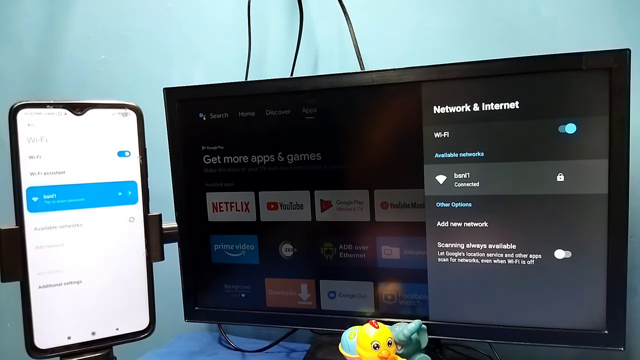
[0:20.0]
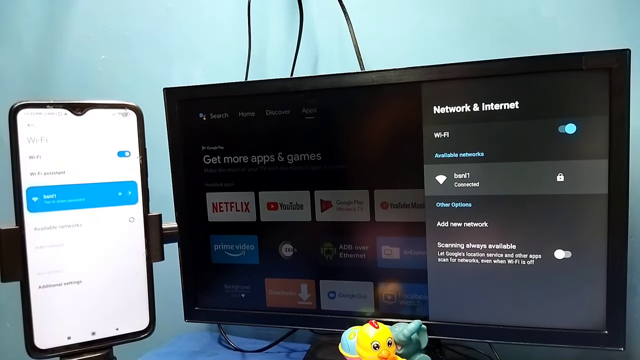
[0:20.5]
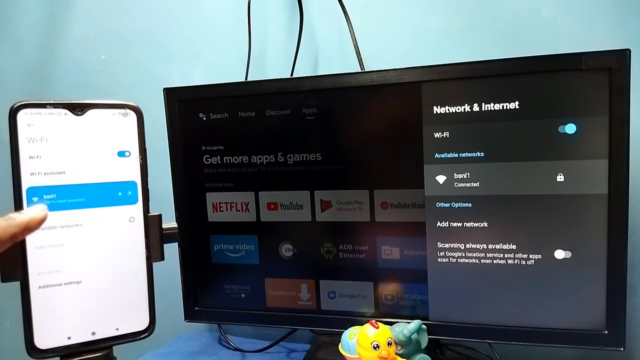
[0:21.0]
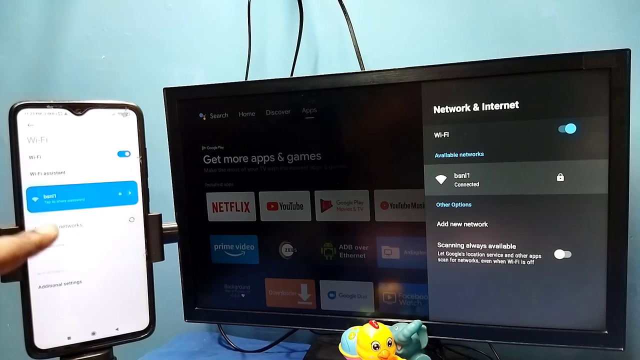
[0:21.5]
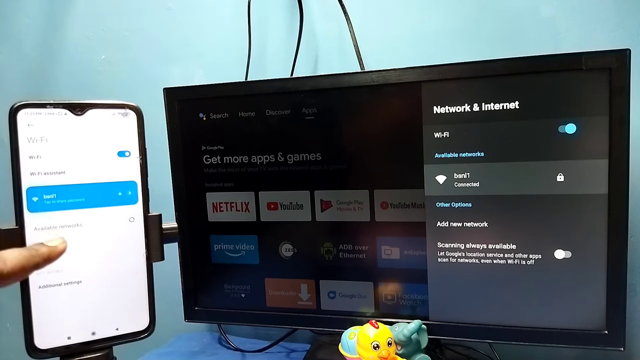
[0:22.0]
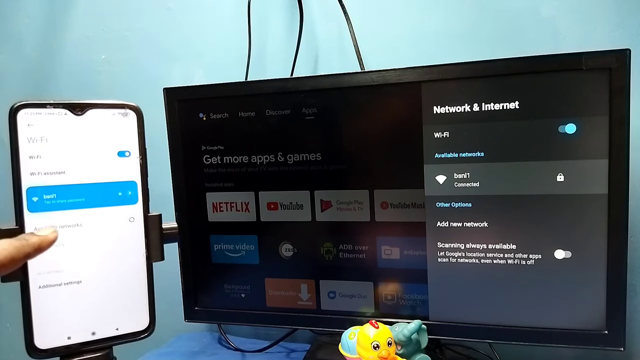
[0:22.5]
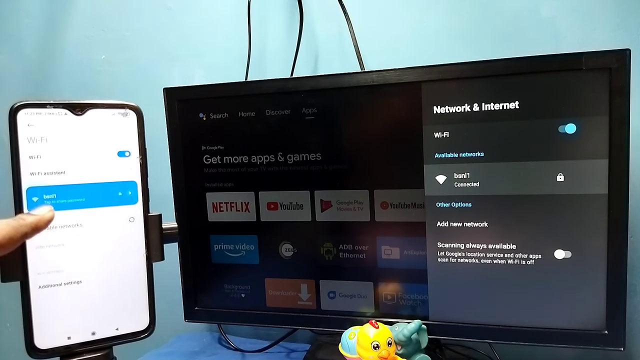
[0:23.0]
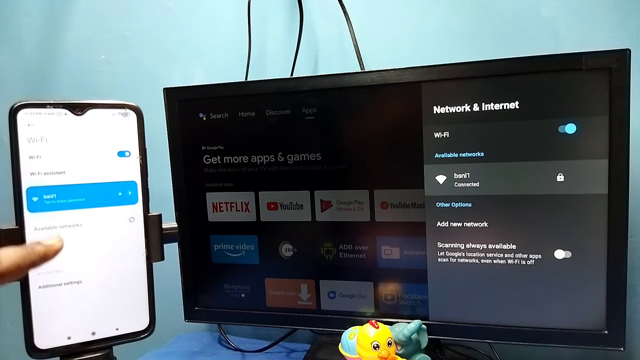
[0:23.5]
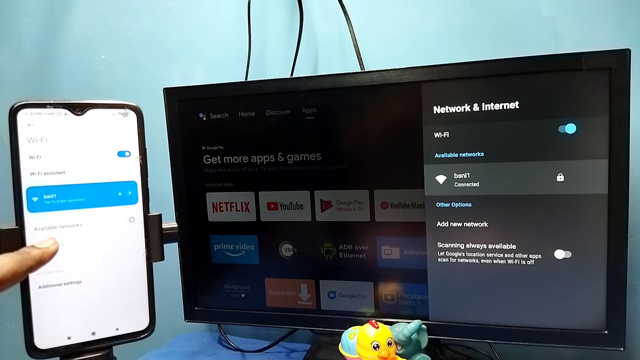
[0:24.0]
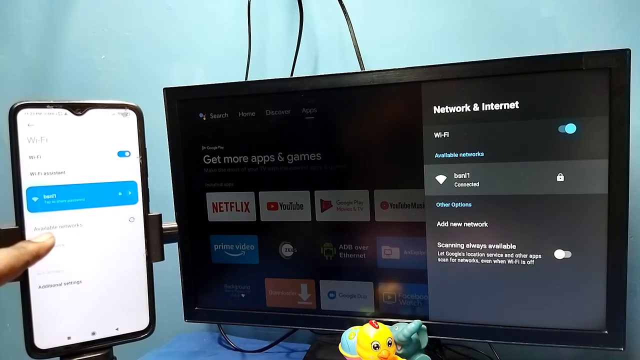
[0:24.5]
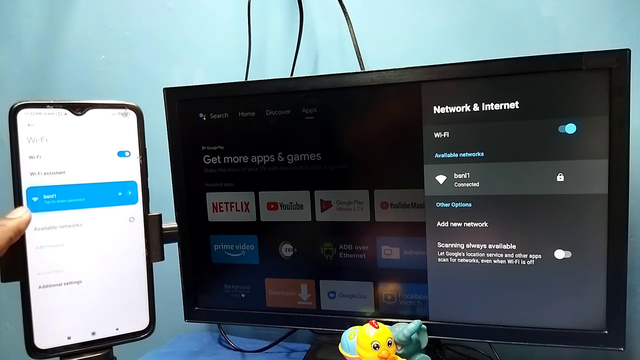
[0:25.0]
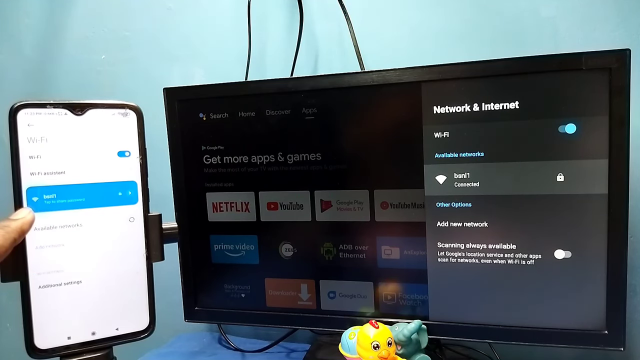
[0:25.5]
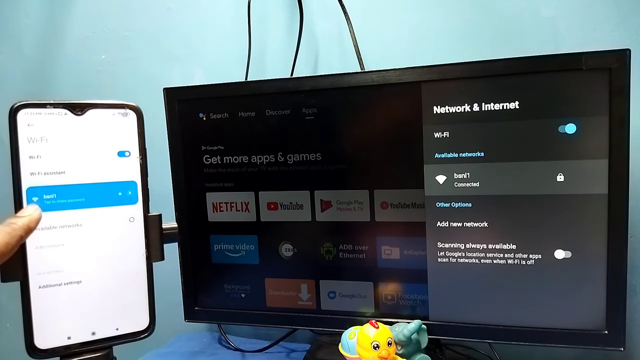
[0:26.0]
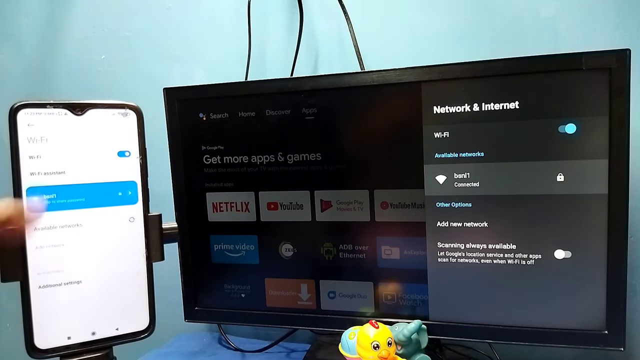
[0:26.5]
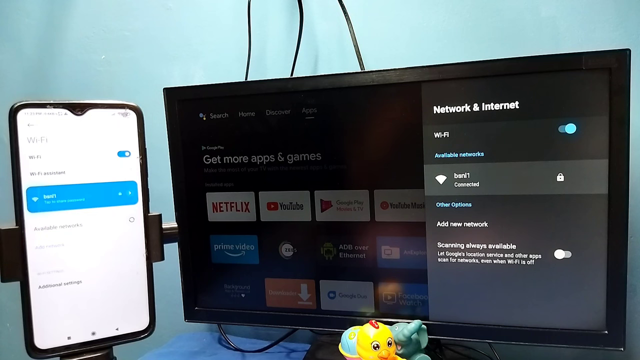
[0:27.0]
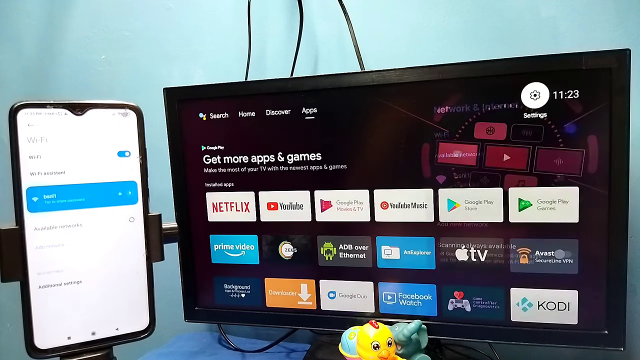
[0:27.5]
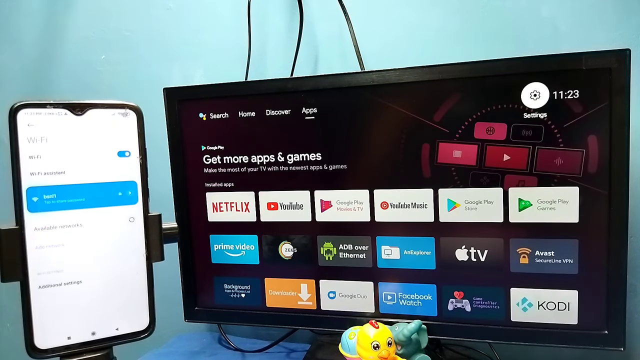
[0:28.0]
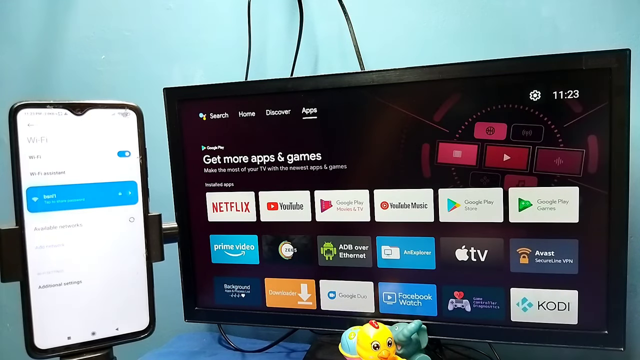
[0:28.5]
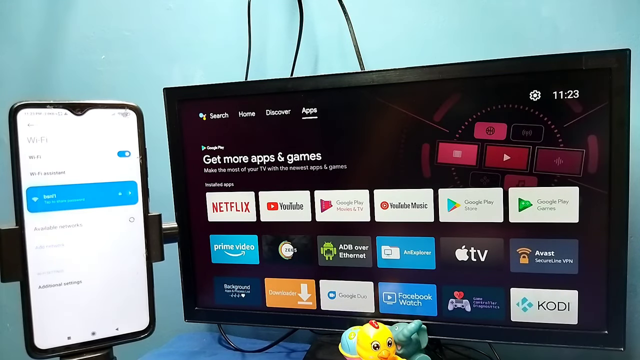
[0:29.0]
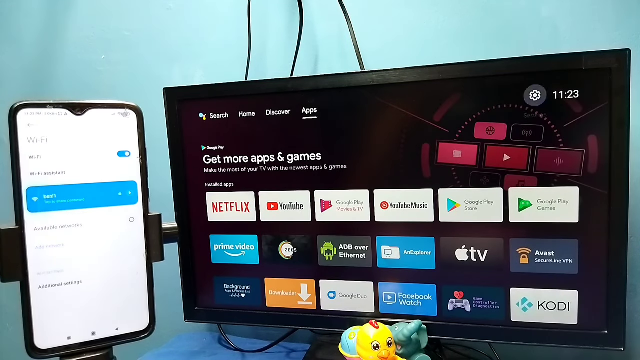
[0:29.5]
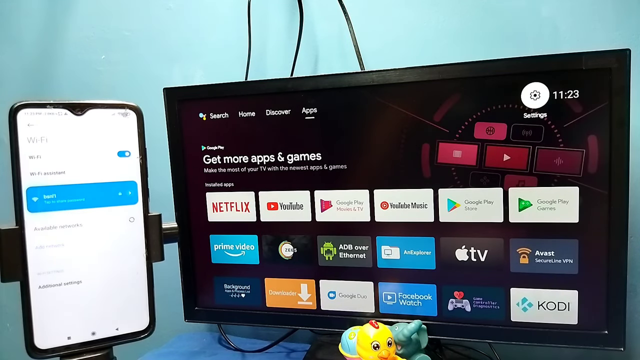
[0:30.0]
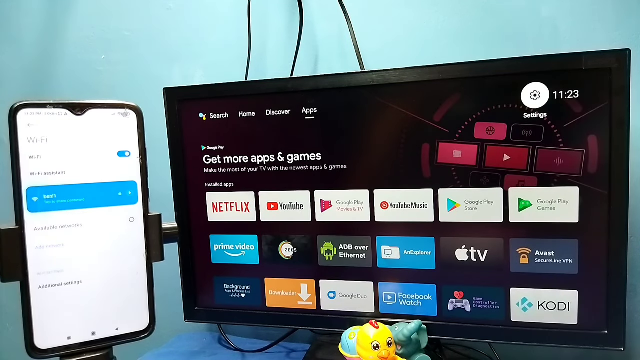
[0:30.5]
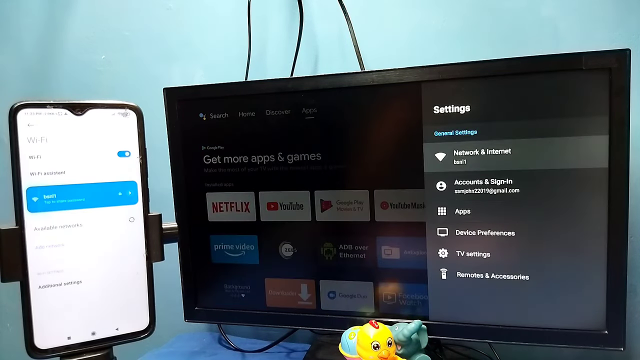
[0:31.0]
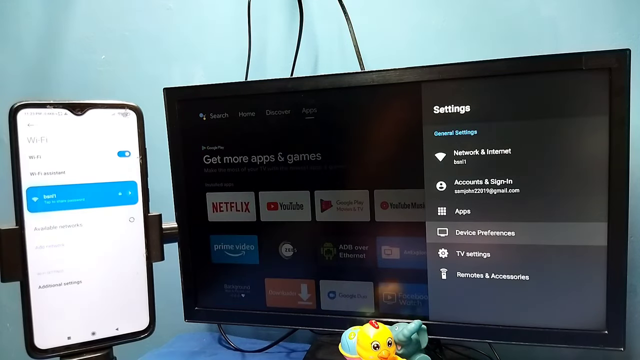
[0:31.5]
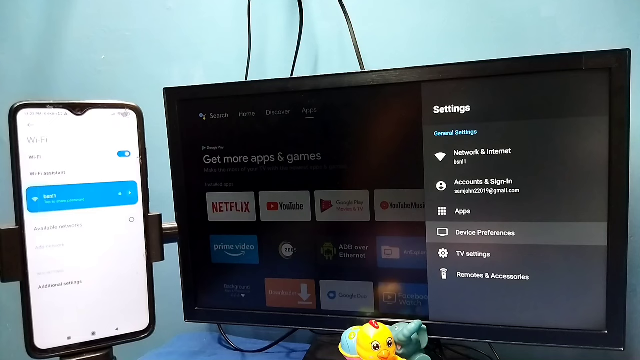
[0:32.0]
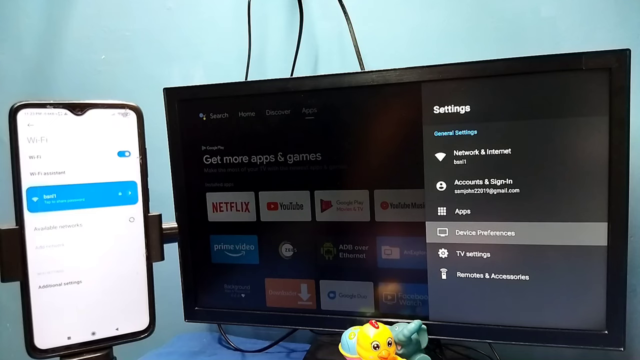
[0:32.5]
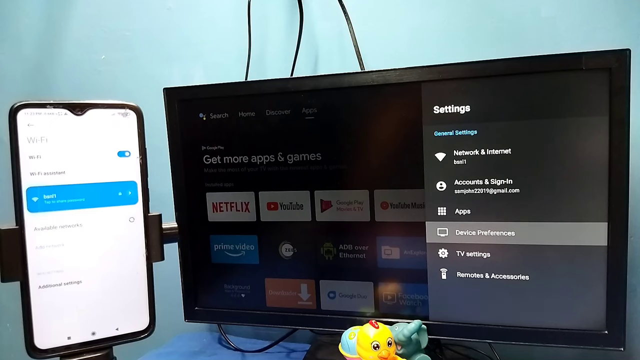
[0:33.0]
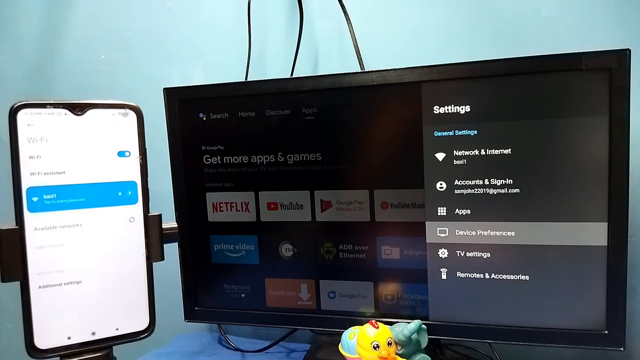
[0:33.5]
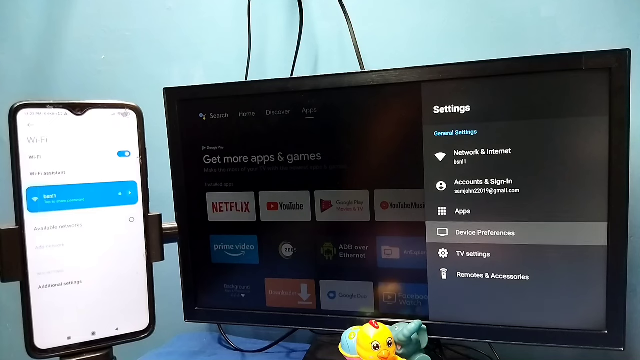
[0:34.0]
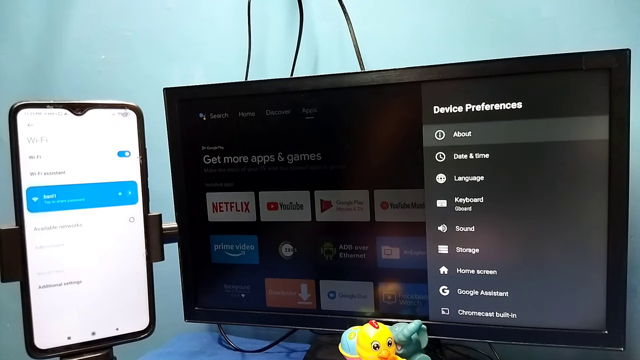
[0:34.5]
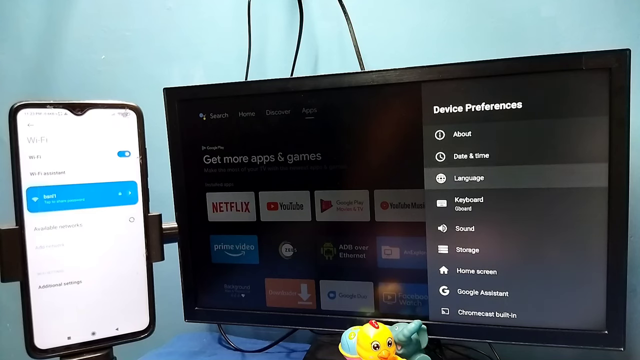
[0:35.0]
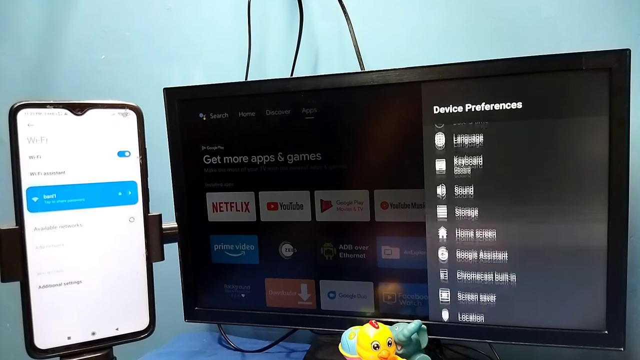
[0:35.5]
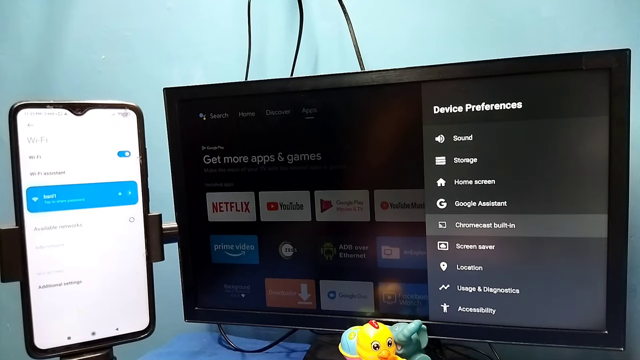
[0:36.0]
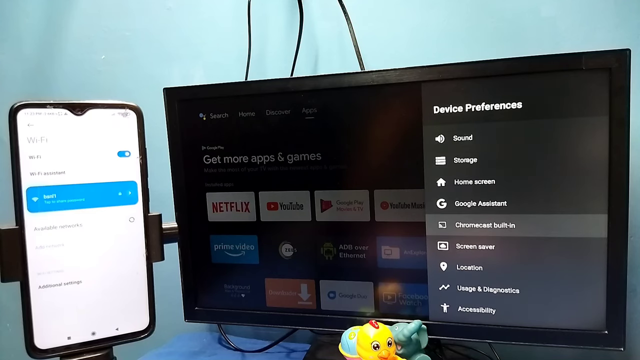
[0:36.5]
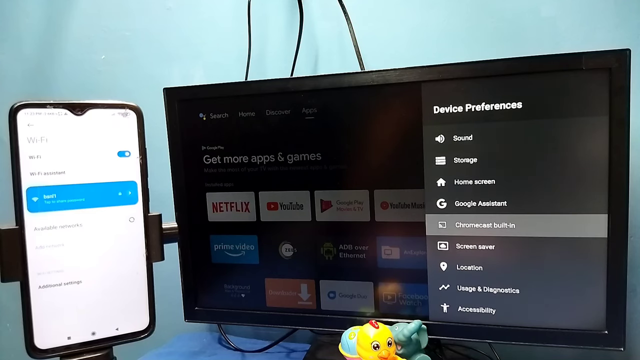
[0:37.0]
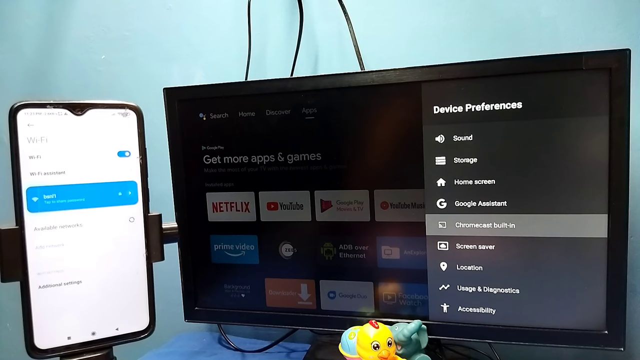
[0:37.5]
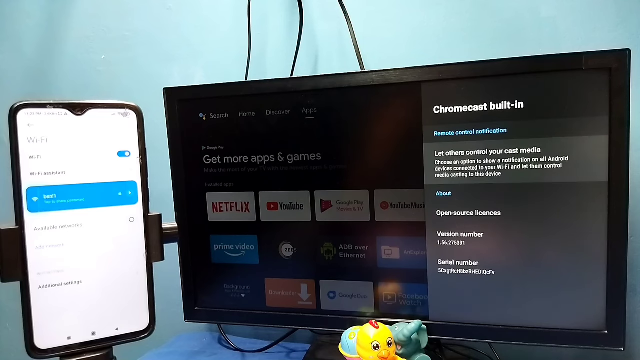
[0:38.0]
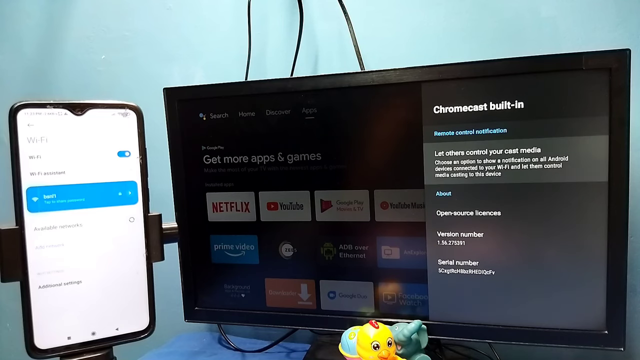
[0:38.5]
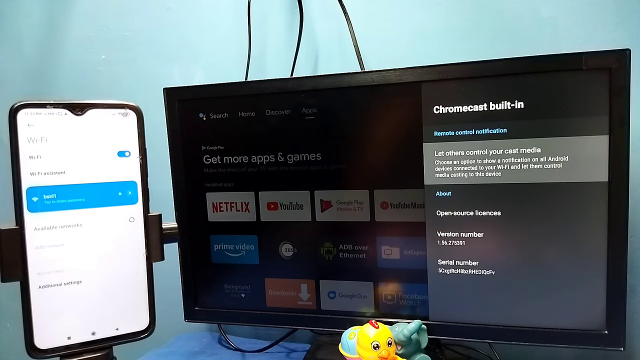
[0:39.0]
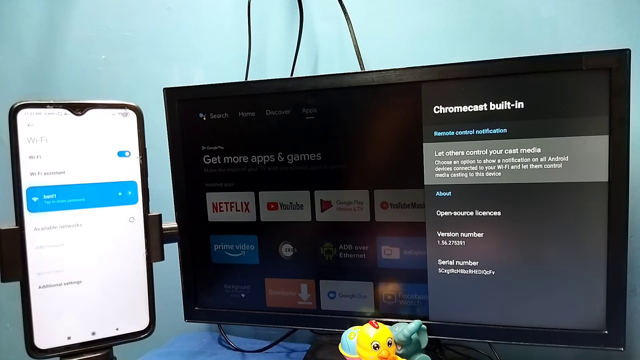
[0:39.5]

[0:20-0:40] A left hand points with its index finger at something on the phone, and settings come up on the flat screen device, showing "device preferences" and "Comcast built-in"; it looks like they are at the "network and internet" section, apparently syncing the phone and the flat screen, which is probably a TV. Three black cords come down in the middle toward the flat screen. The phone is upright in a holder next to the screen, and no keyboard is visible. The phone screen shows Wi-Fi on the left, and the flat screen on the right goes to the same, with no hand visible over there. Both the phone and the flat screen end up on the Wi-Fi page.